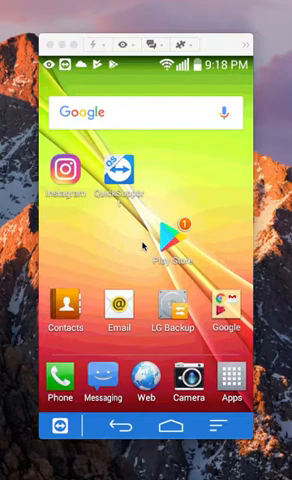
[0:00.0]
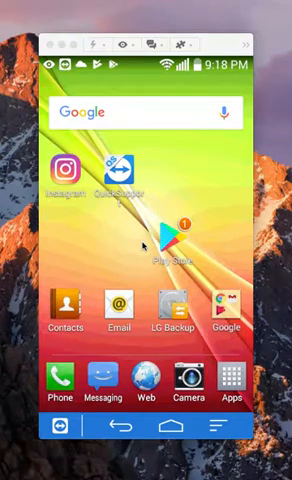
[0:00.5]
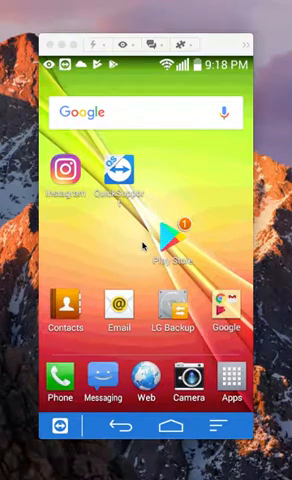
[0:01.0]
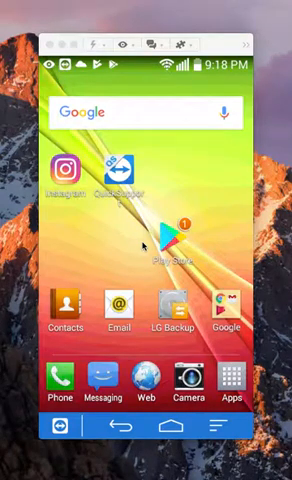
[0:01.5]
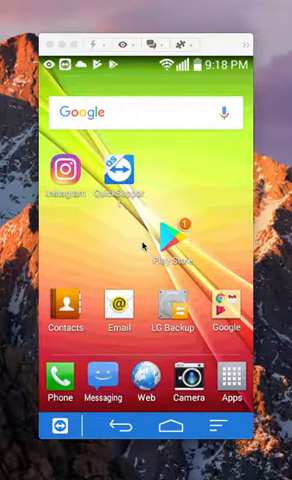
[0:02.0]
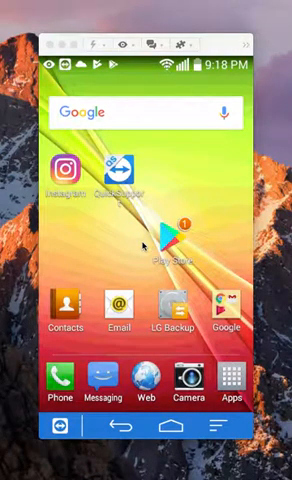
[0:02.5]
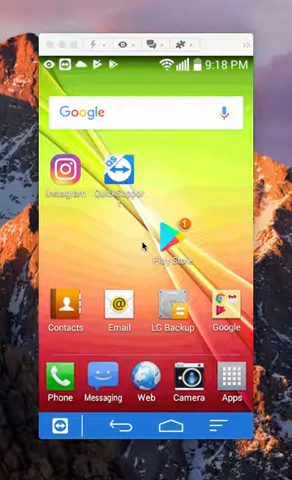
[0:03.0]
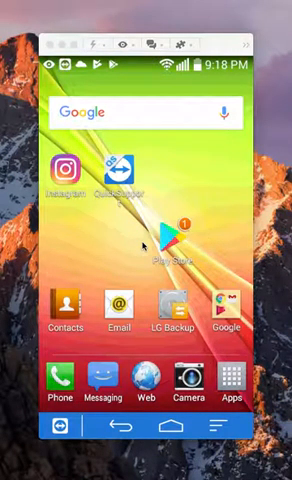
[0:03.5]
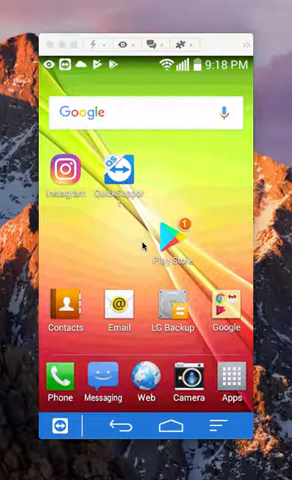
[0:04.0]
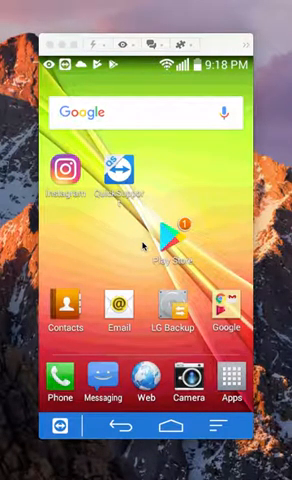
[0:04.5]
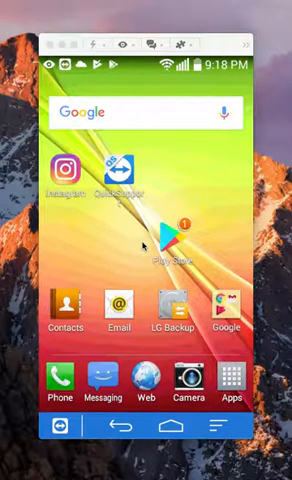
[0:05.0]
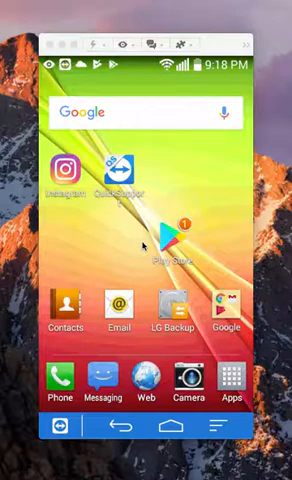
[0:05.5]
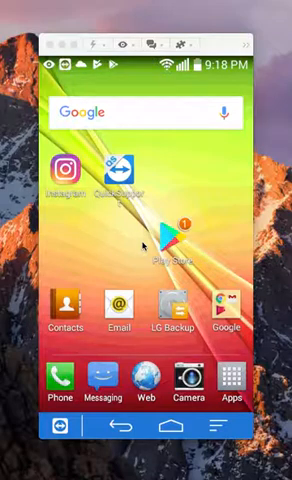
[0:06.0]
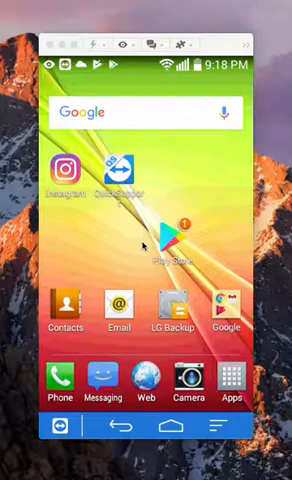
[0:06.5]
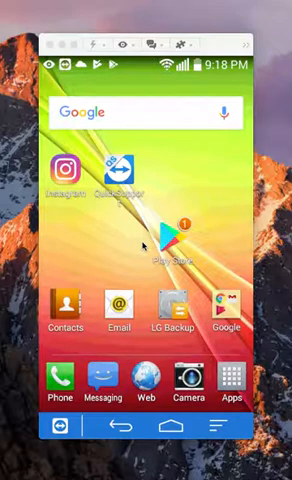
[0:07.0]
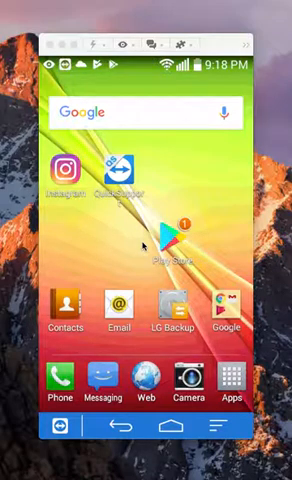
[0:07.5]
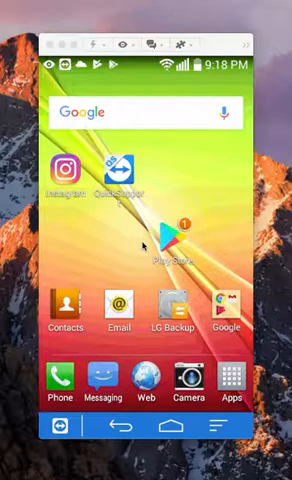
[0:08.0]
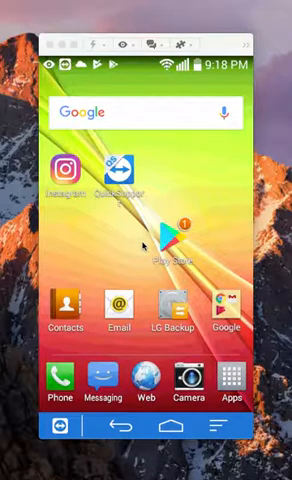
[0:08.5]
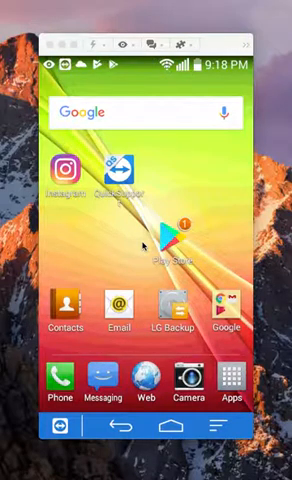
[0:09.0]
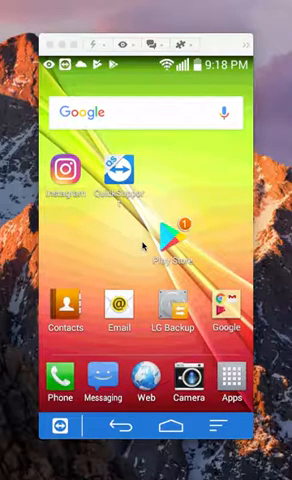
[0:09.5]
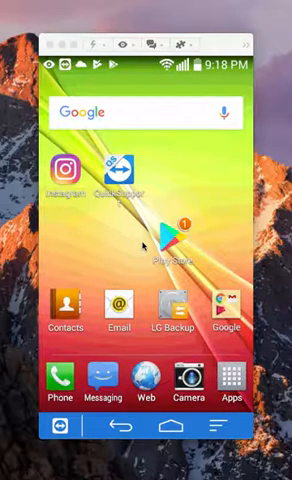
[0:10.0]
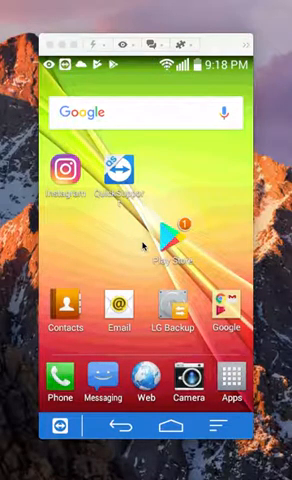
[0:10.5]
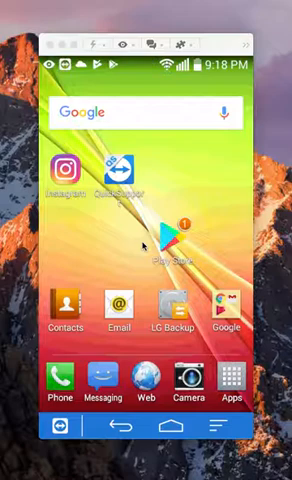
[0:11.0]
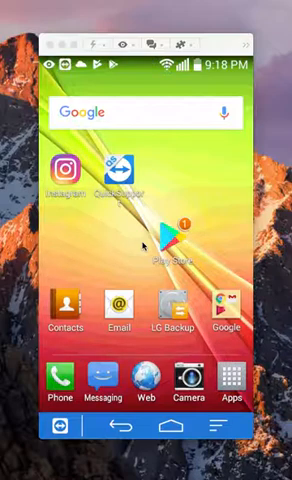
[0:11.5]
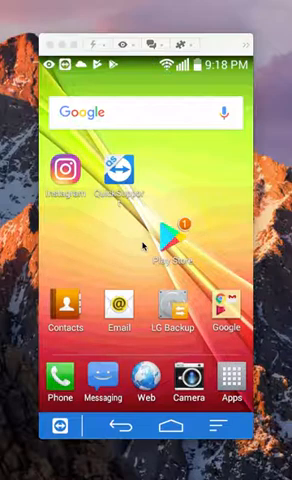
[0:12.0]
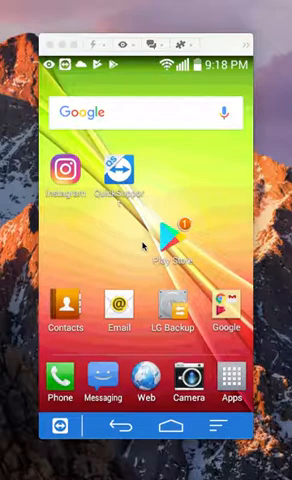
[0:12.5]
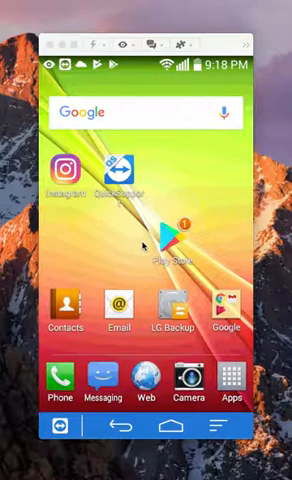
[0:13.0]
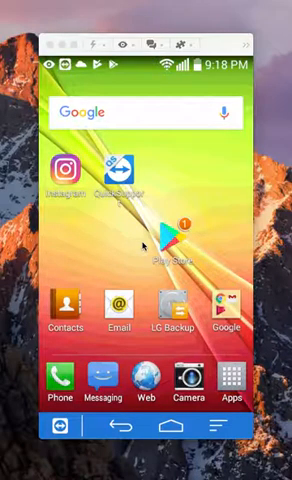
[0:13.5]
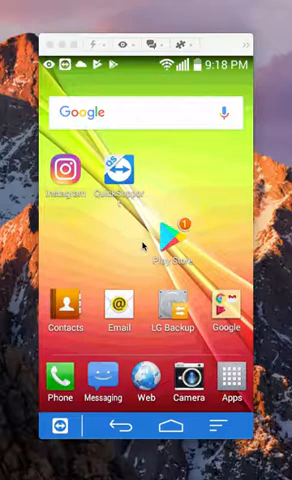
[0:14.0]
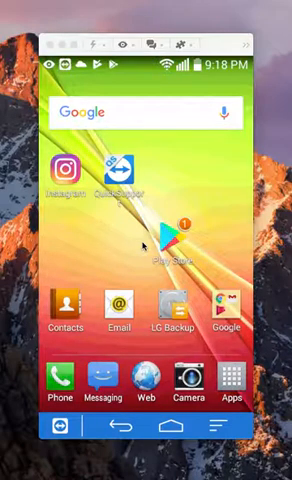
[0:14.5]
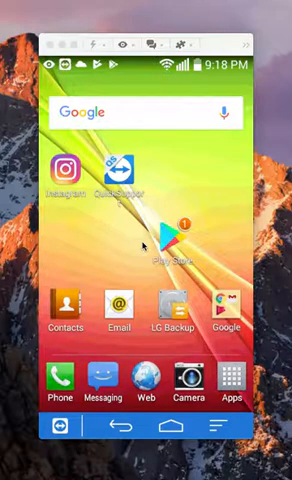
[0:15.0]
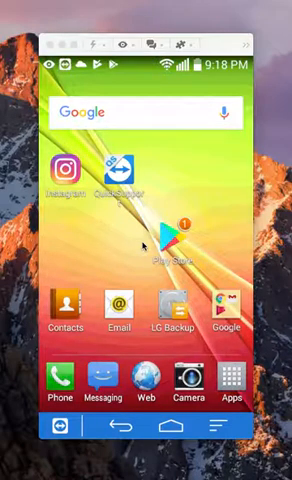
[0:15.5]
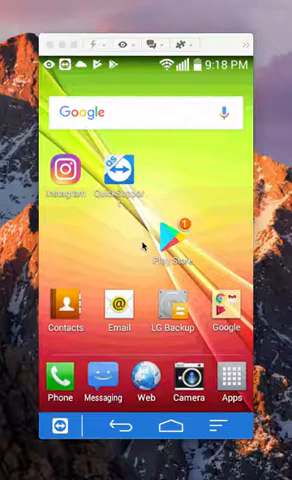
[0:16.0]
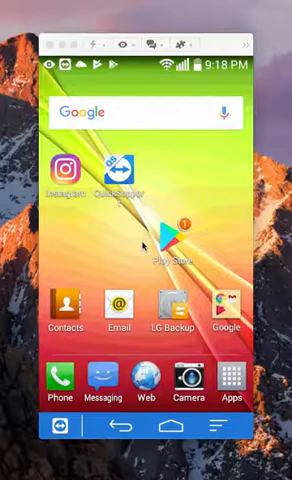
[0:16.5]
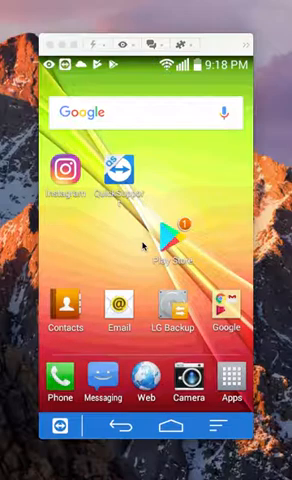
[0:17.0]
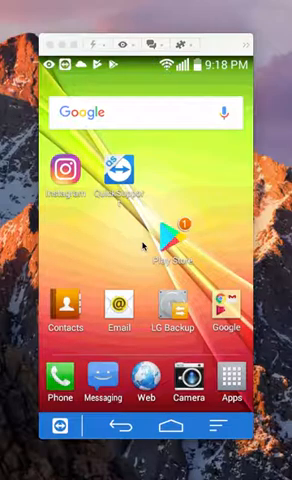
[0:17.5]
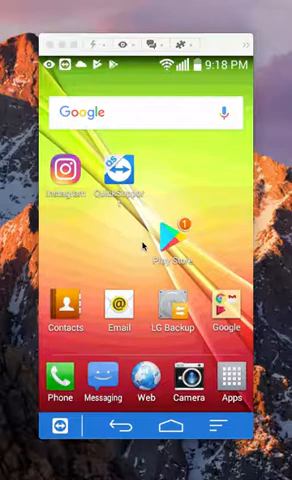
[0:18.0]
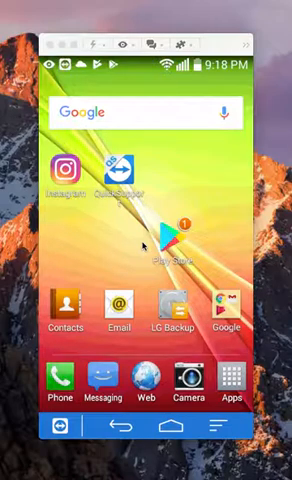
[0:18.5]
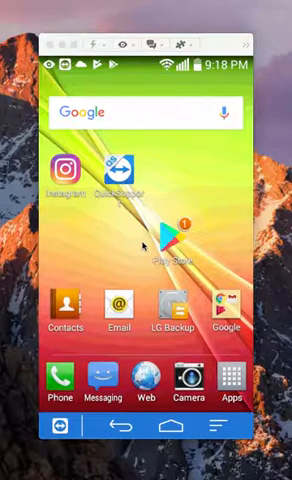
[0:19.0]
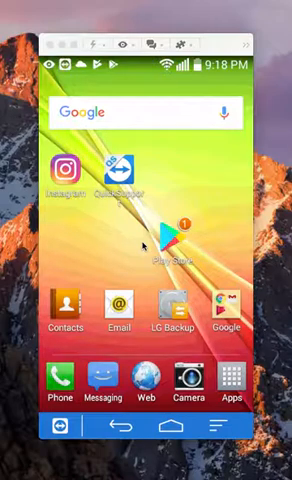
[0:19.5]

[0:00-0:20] A cell phone screen shows the Google search box with the Google logo and multiple icons: Instagram, Contacts, Email, LG, Backup, Google, Phone, Messaging, Web, Camera and Apps. The time, the battery meter, the cell phone signal strength and the Wi-Fi signal are visible, along with a Home button and a Back button, which is an arrow turned backward. Behind the icons is a mountain range with snow on it, and the sky. A cell phone screen then appears that is lime green at the top, hues down to yellow, and gradually becomes a deeper red toward the bottom. At the bottom is a blue box with icons in it; one appears to be a home button and the other is a backward arrow button. There are three white dashes of different sizes at the bottom on the right.